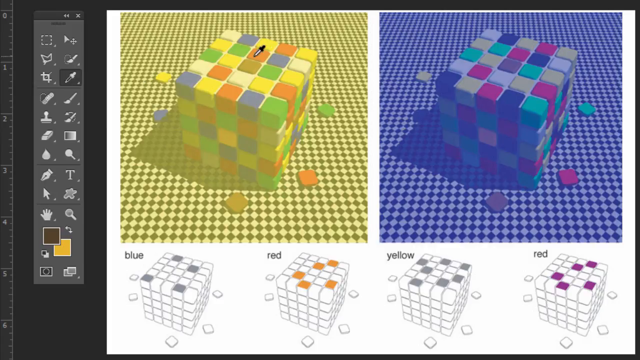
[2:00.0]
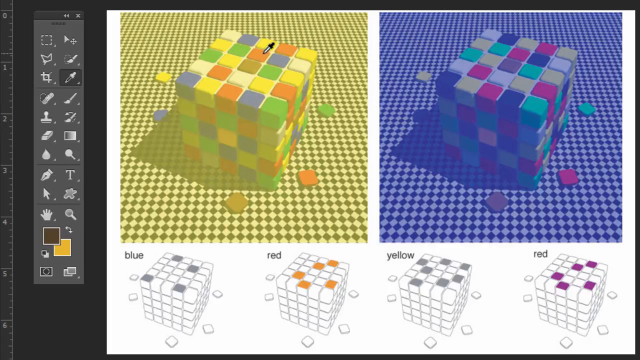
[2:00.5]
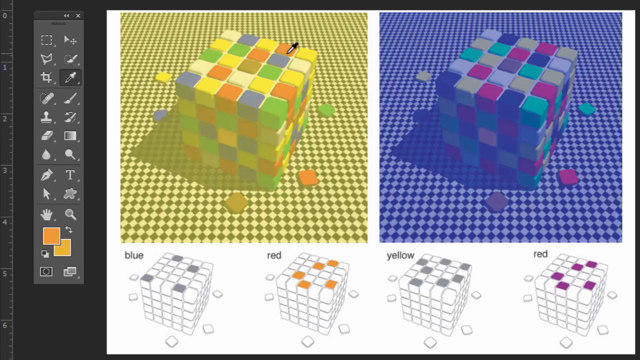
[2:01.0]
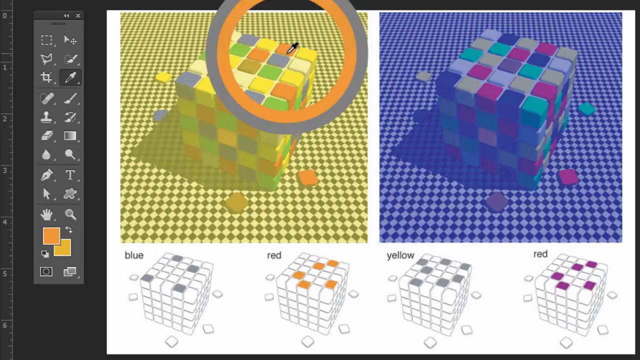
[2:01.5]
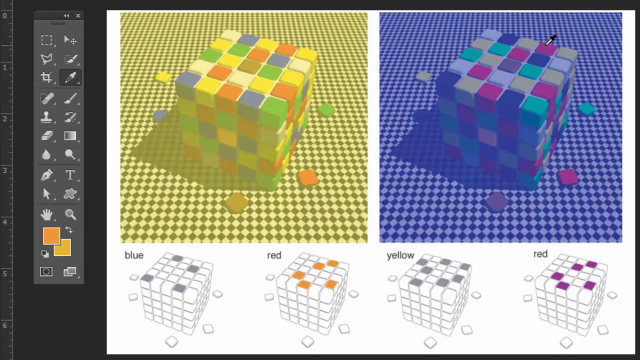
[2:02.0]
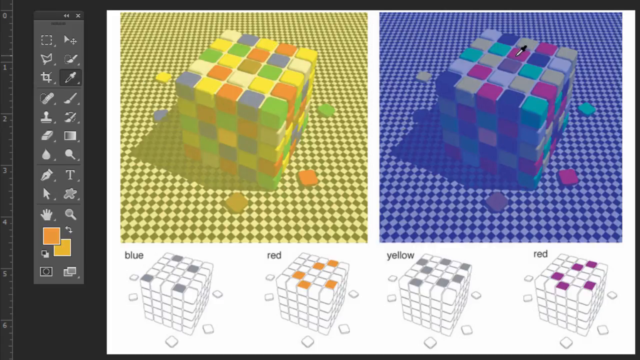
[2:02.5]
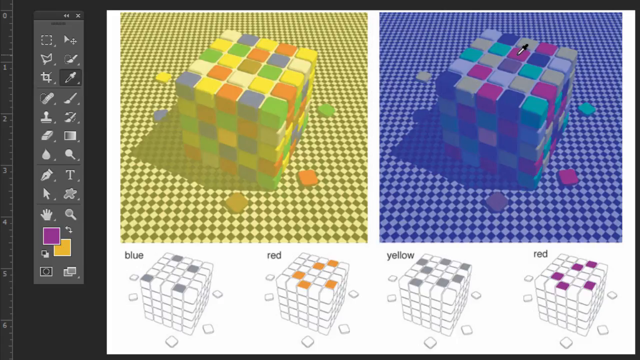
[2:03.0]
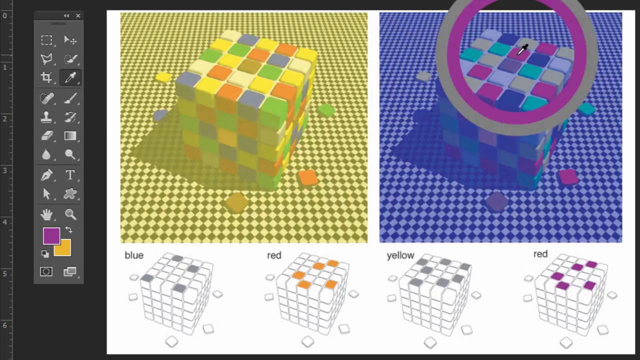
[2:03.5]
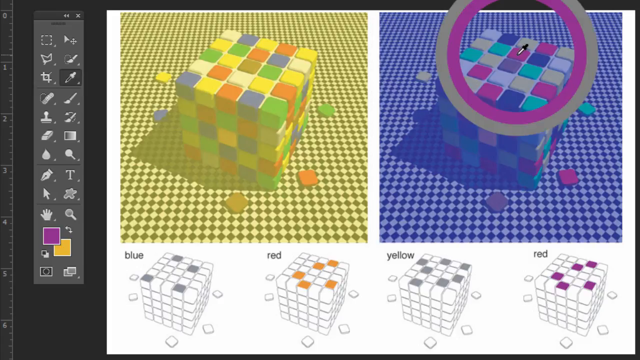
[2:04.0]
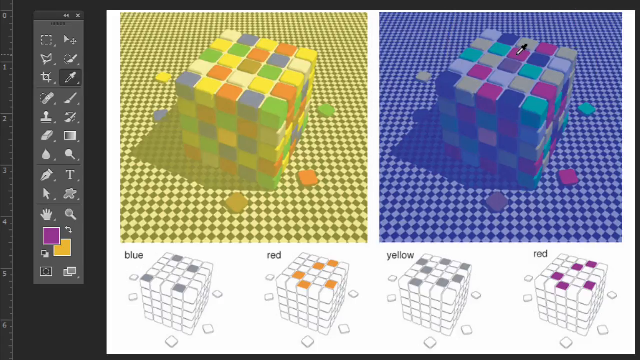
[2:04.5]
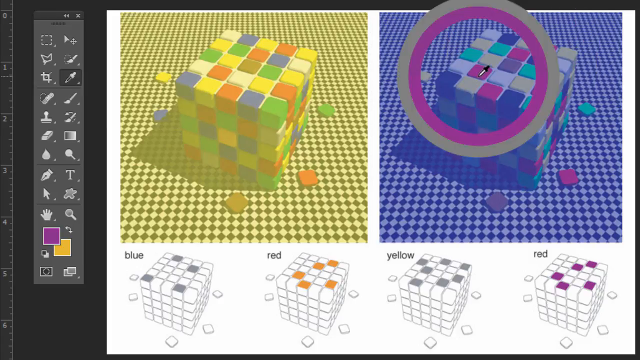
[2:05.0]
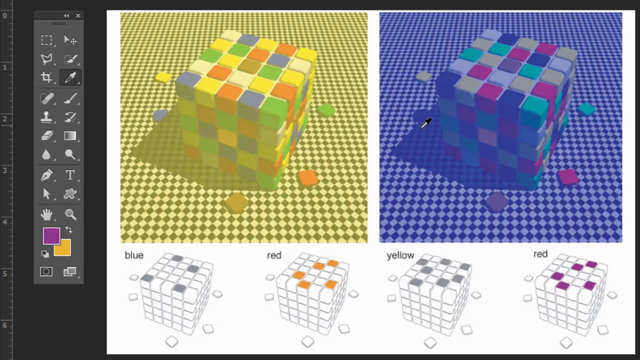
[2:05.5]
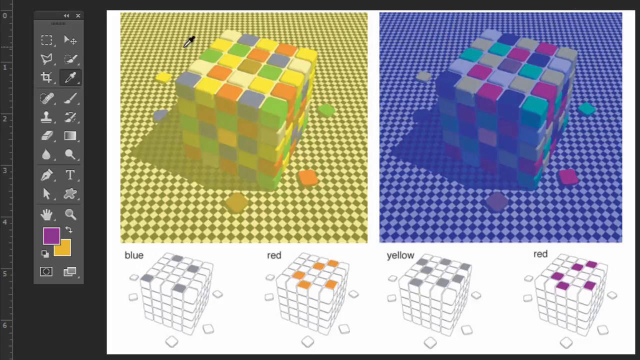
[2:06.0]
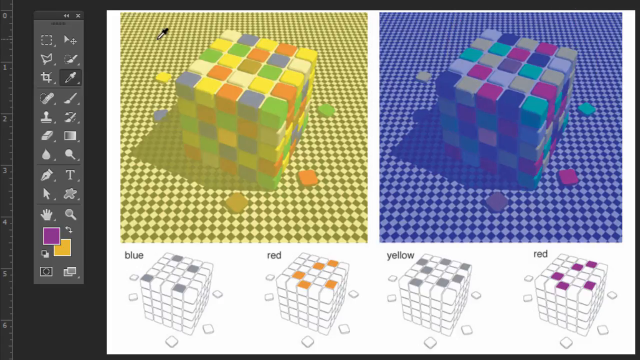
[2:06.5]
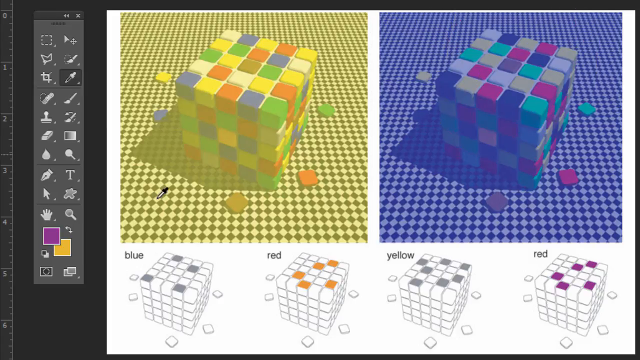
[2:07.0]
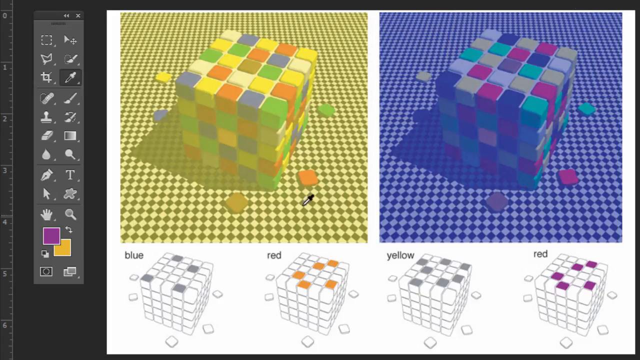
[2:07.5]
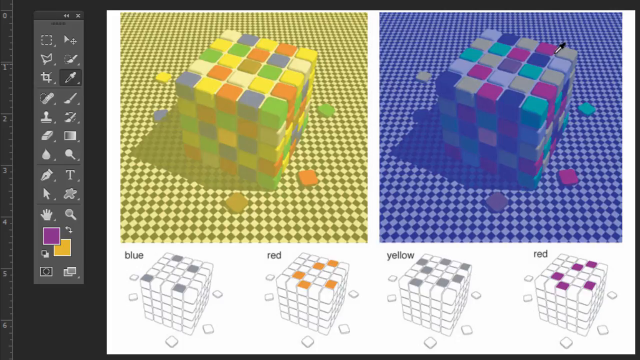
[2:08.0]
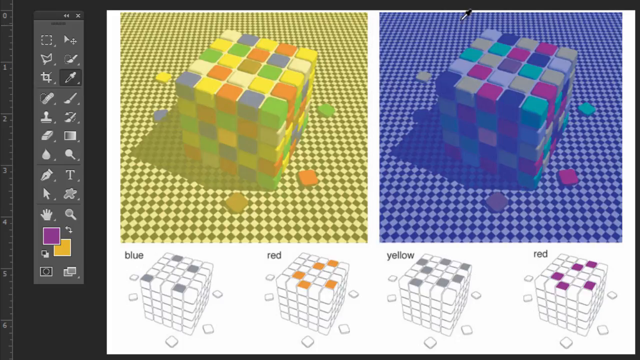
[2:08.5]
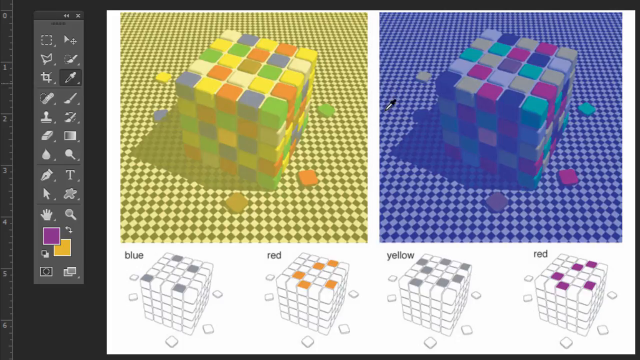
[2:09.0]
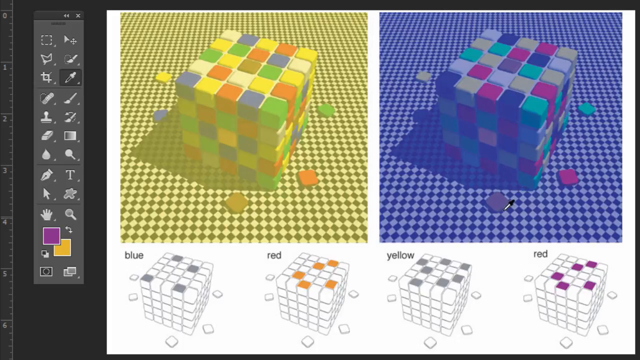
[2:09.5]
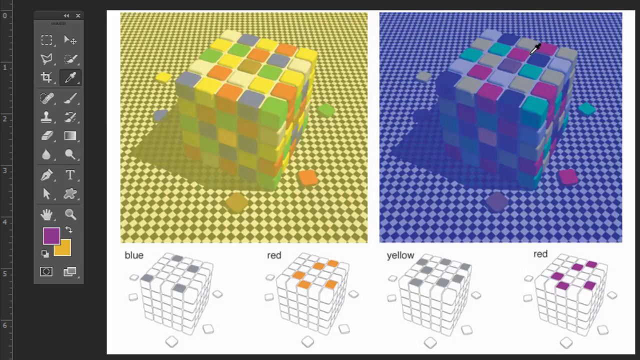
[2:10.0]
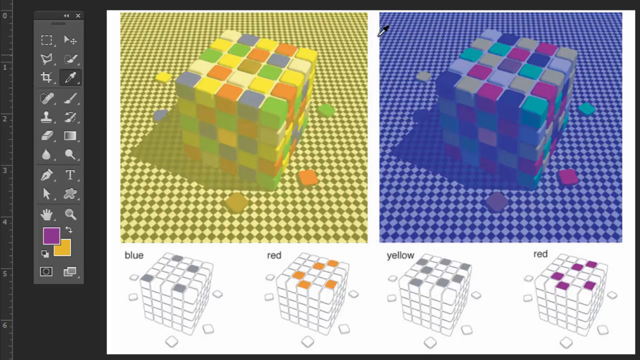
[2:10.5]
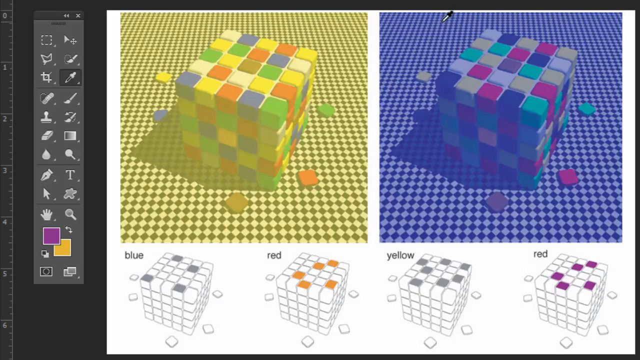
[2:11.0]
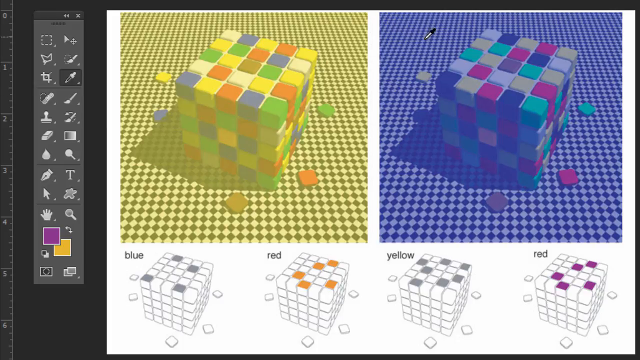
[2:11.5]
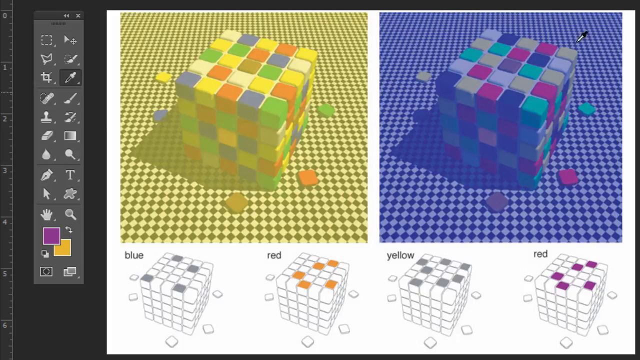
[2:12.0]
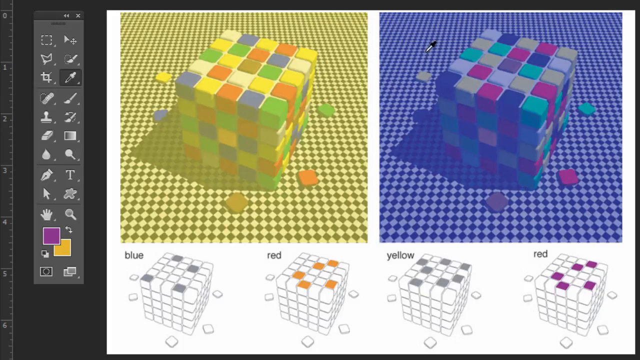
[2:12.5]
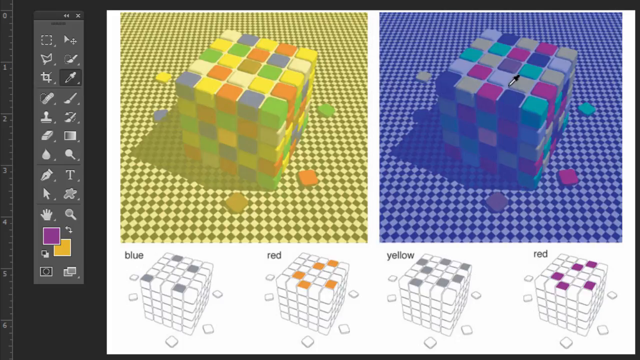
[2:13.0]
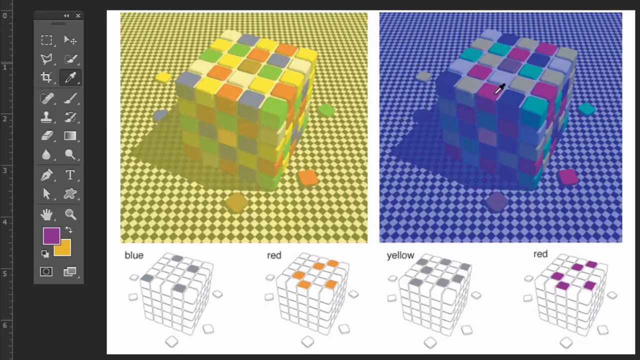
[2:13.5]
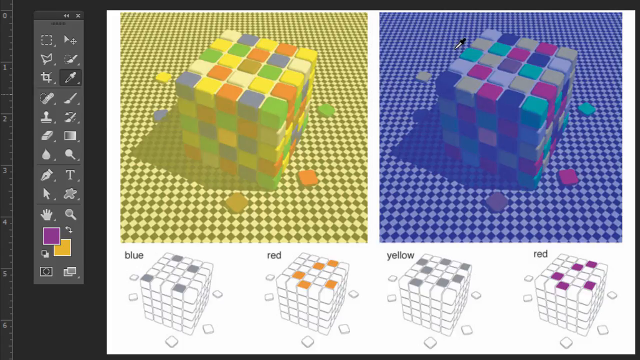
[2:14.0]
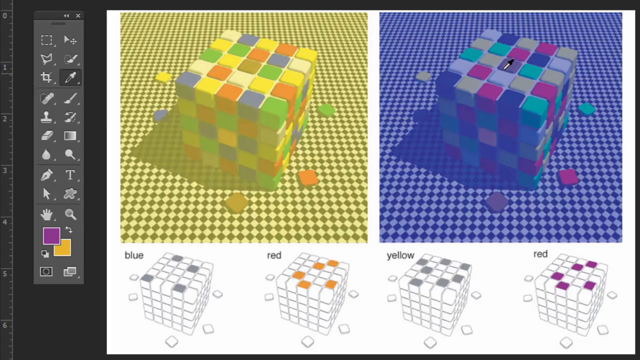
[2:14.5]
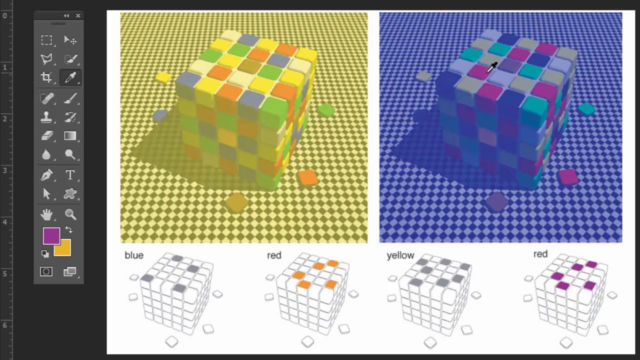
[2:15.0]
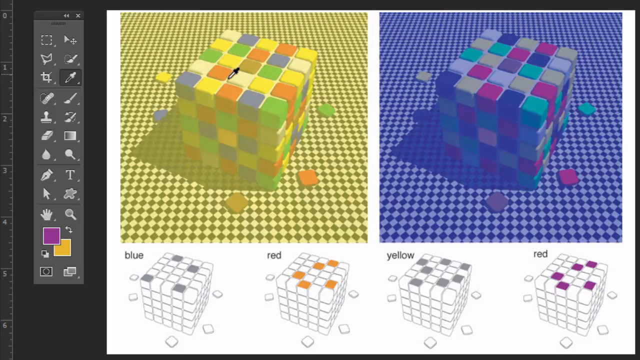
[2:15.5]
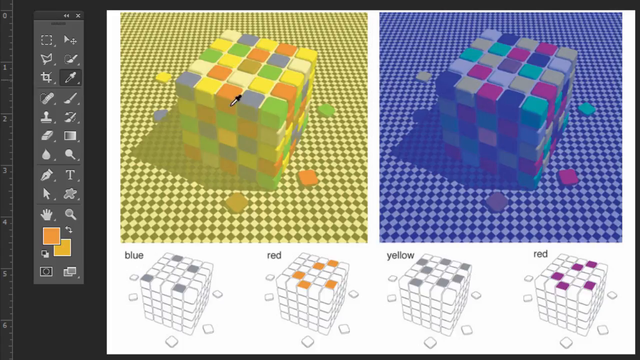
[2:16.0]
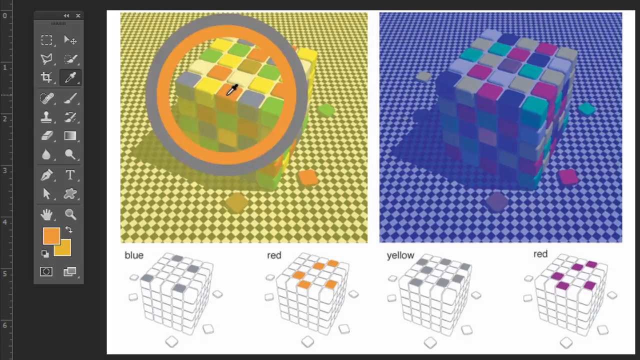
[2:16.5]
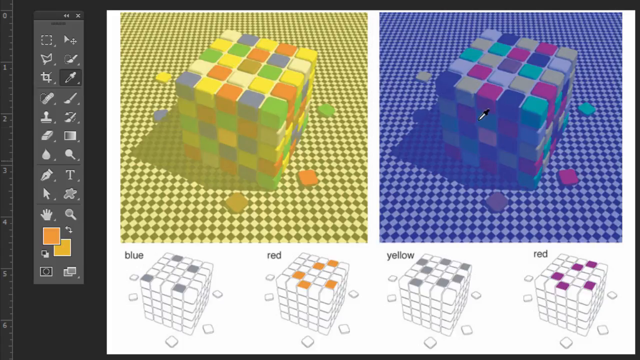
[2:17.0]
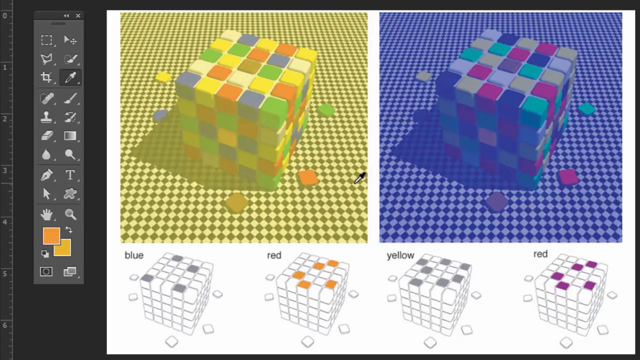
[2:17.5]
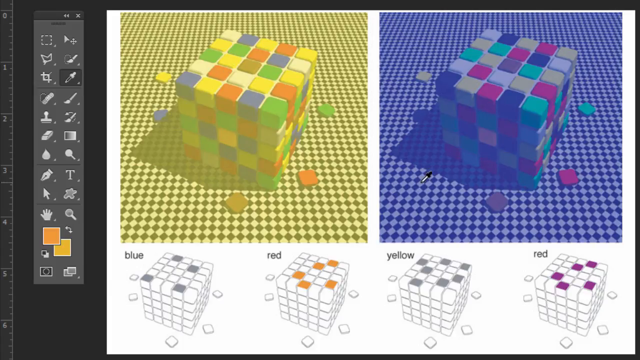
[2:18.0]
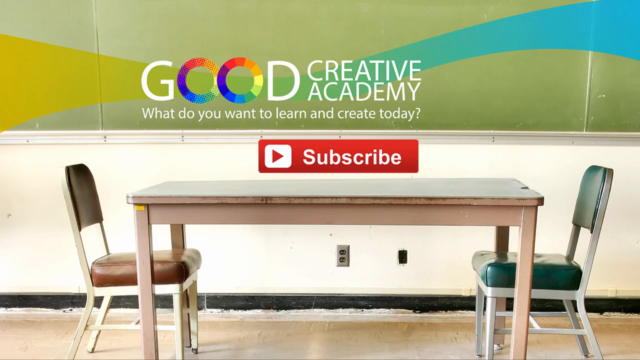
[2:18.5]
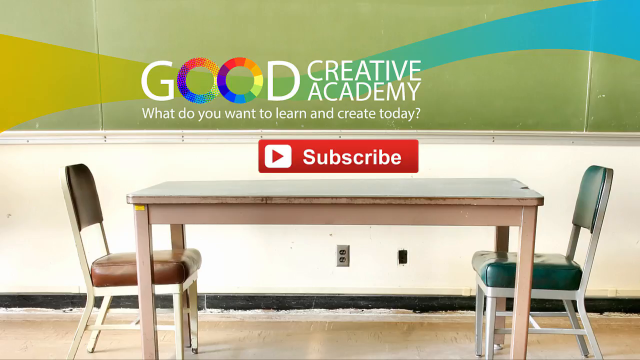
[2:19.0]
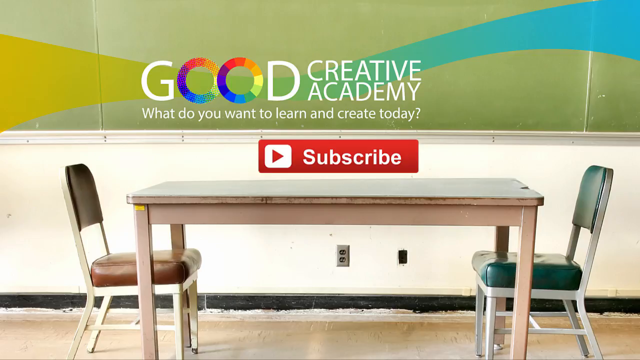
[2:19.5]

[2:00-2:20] In the Photoshop window, the tools are open on the left along with a little of the ruler. The eyedropper color select tool hovers over a red square on the left Rubik's Cube diagram, which has a yellow overlay. It selects the square, which comes out orange. It then goes to the other side and selects the red square under the blue overlay, which comes out purple. A still advertising their YouTube channel appears: a wooden table with two chairs of matching style but different colors at opposite ends of the table. The table is in poor condition, as is the wall behind it, while the chalkboard looks in very good shape. The text reads "Good Company Creative Academy. What do you want to learn and create today?"